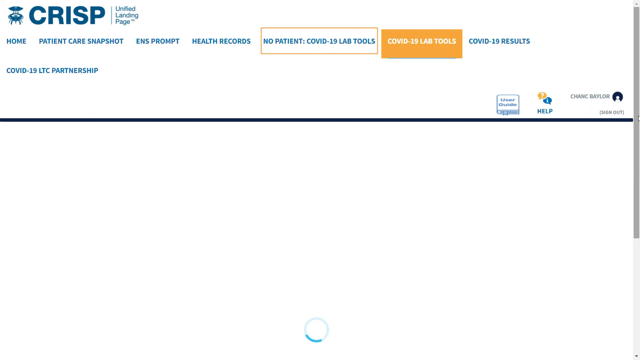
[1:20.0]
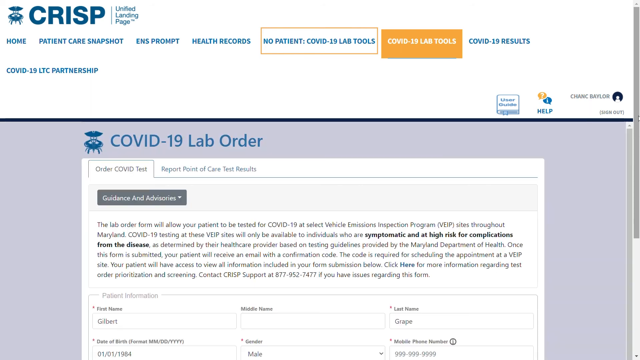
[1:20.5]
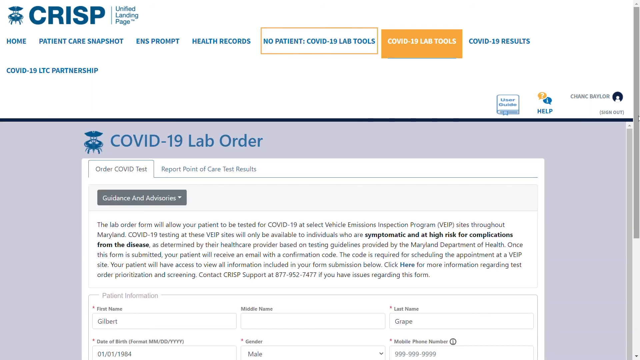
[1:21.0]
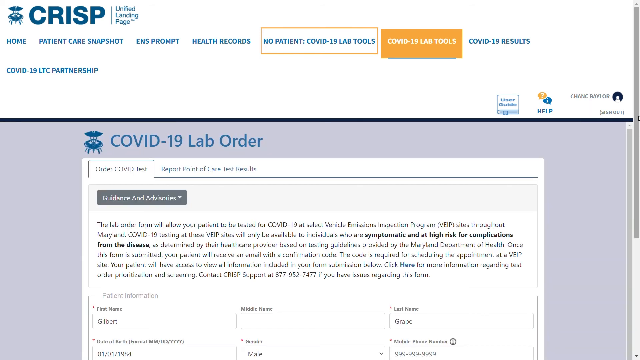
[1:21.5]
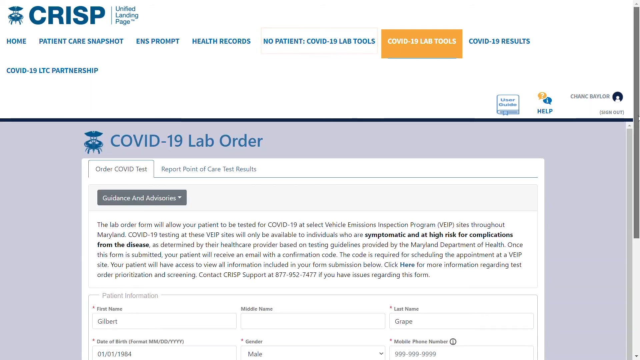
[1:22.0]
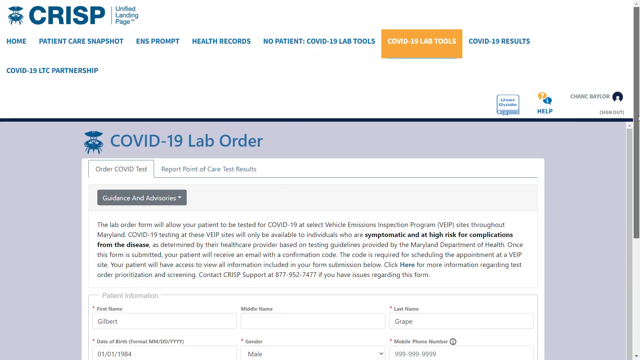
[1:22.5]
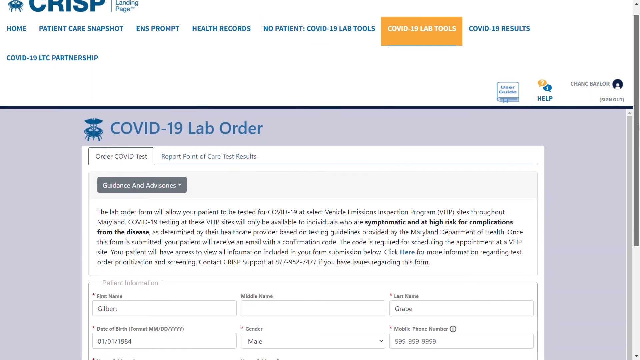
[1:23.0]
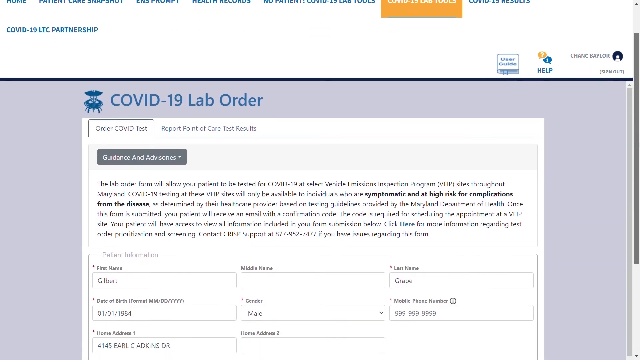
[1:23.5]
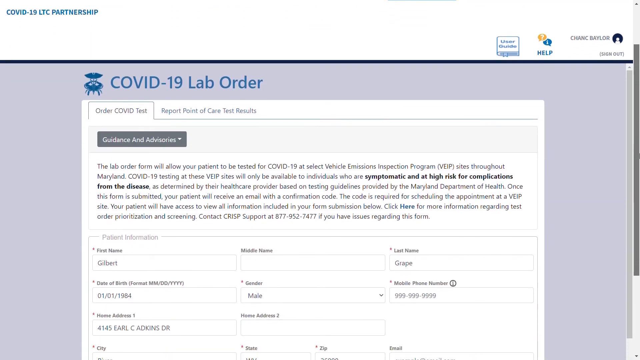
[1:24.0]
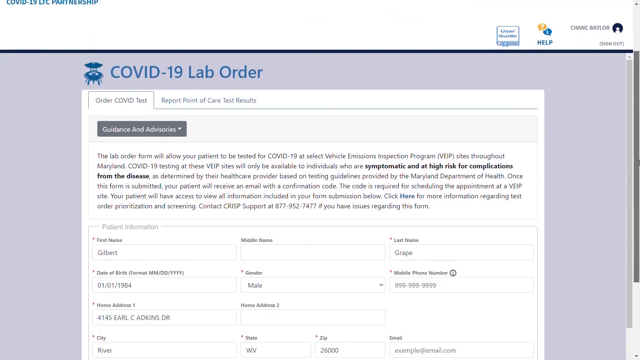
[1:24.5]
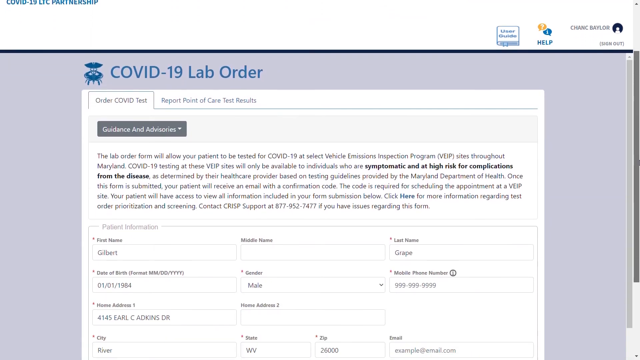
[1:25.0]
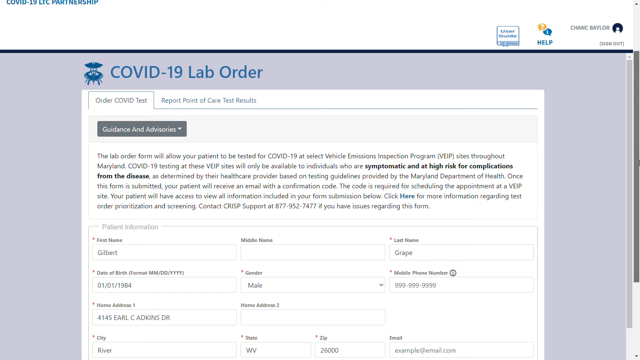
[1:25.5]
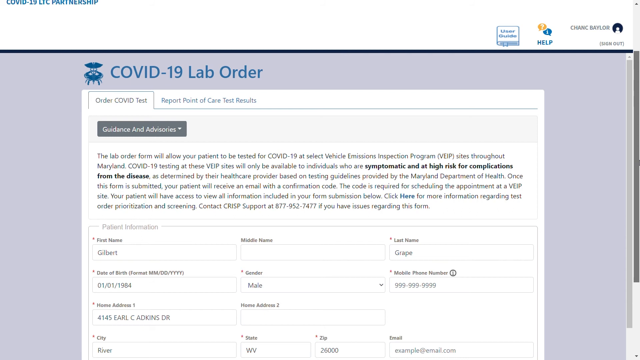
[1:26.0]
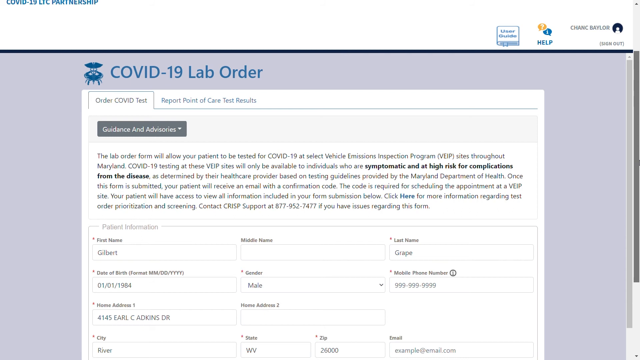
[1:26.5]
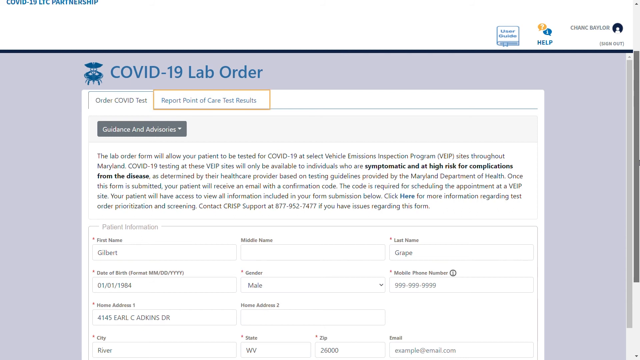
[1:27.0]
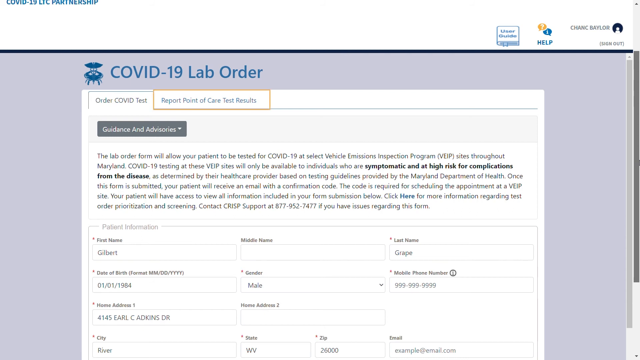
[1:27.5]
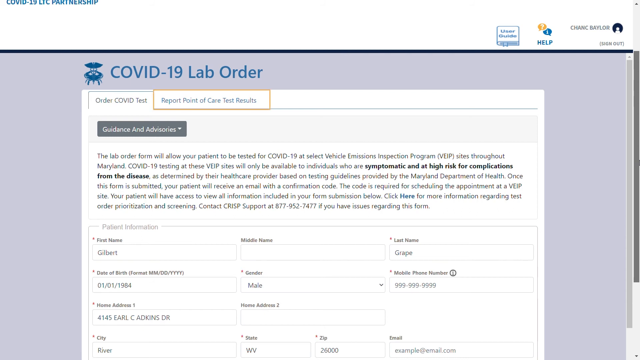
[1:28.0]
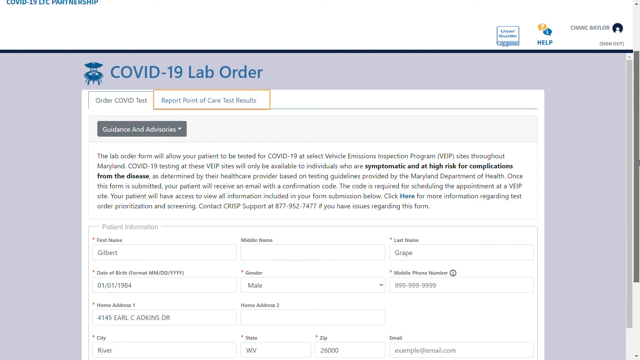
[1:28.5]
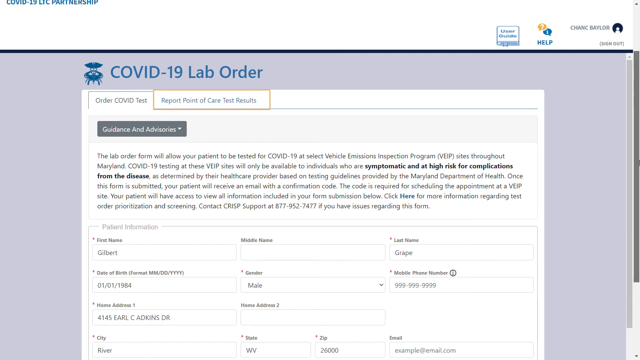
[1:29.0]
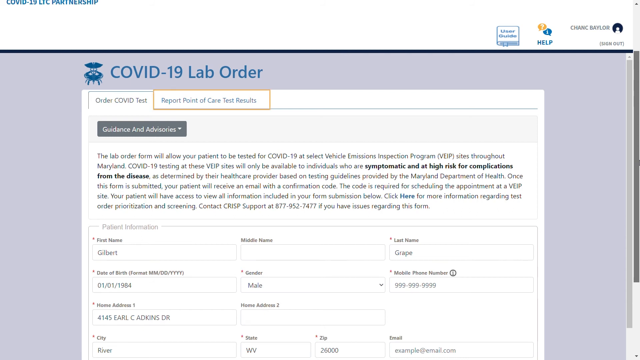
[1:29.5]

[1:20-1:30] A somewhat different CRISP page lists COVID-19 lab tools, COVID-19 results, health records, ENS prompt and patient care snapshot. The COVID-19 lab tools item is highlighted in orange. A COVID-19 lab order then appears: an information sheet with the person's name, address and gender, and "point of care test results," a test result sheet. The screen then goes somewhat blank.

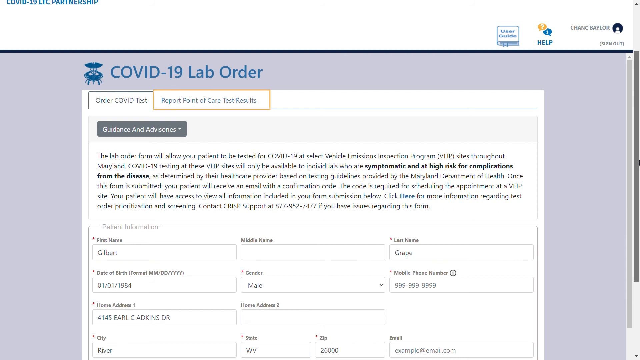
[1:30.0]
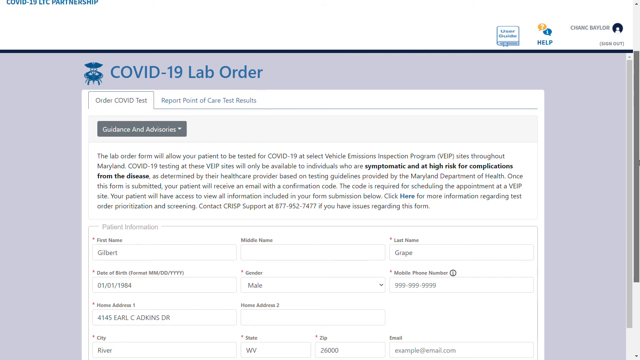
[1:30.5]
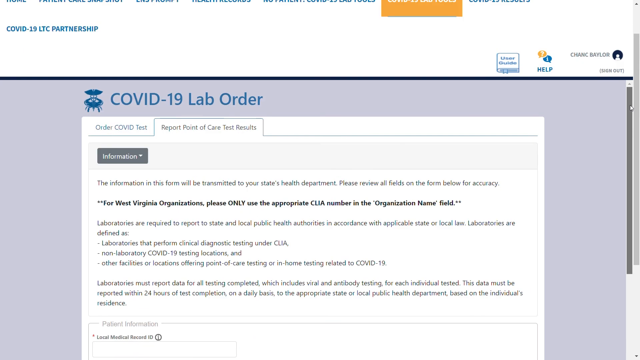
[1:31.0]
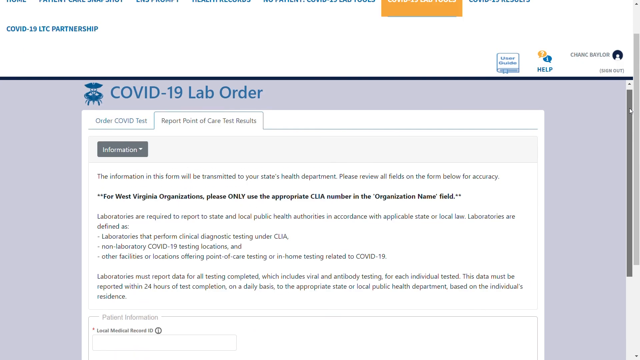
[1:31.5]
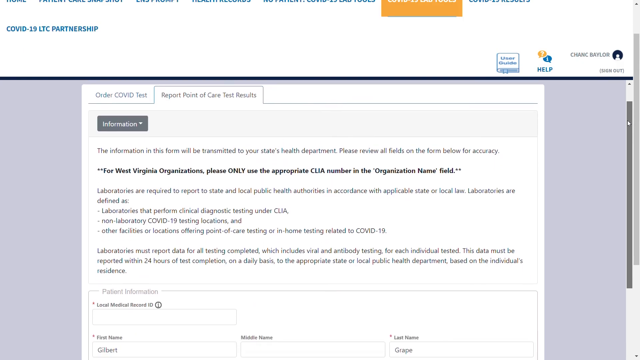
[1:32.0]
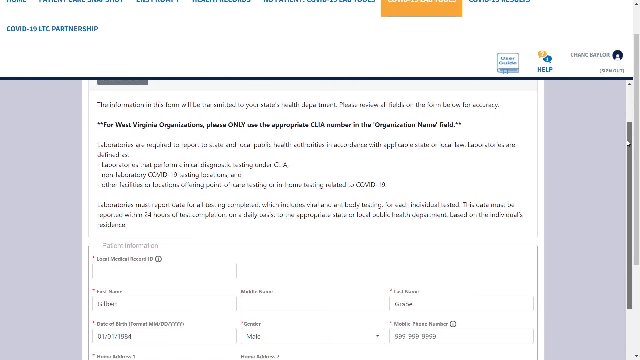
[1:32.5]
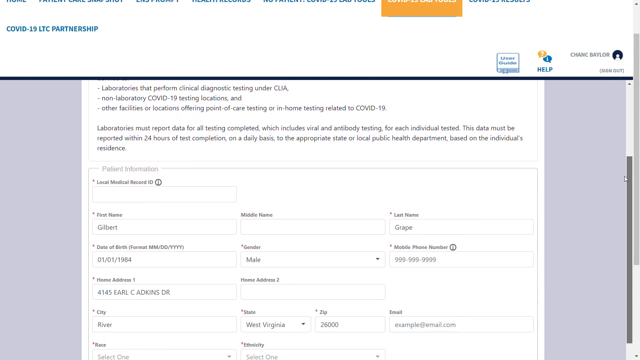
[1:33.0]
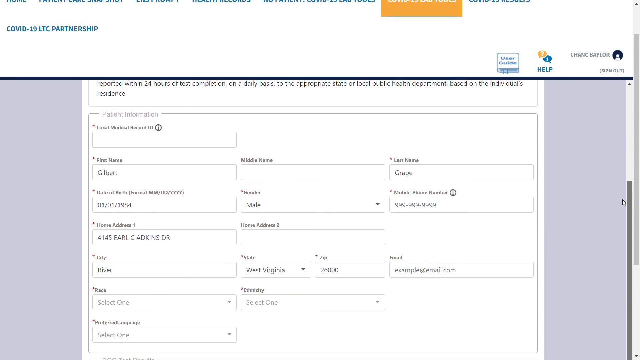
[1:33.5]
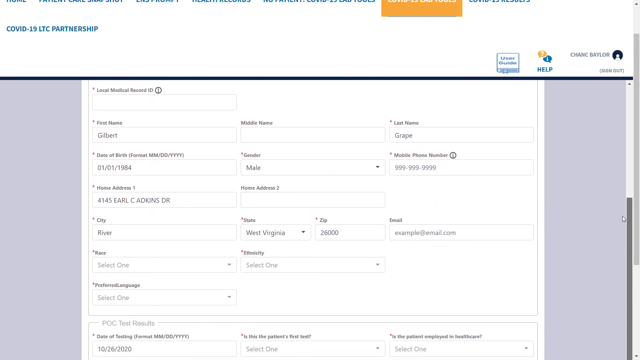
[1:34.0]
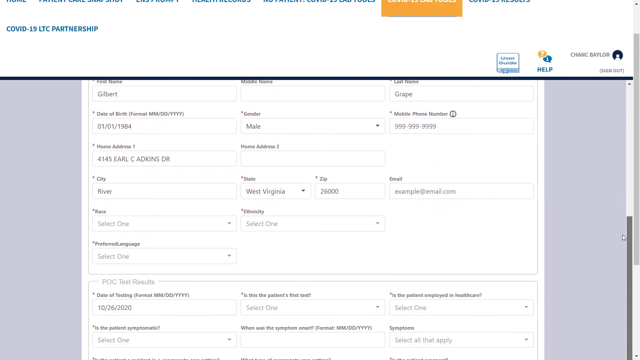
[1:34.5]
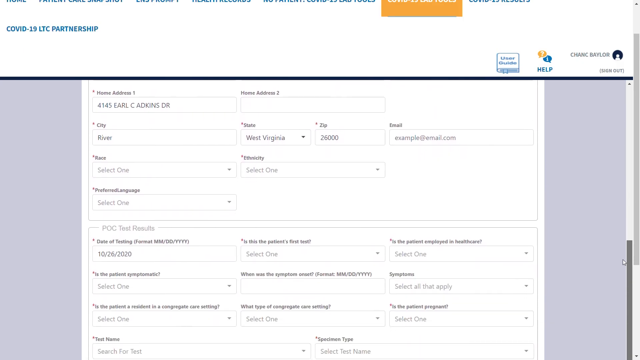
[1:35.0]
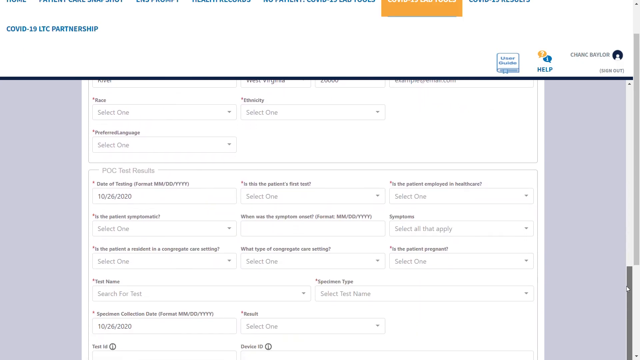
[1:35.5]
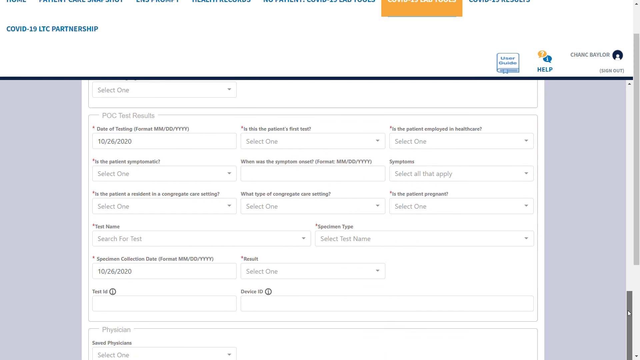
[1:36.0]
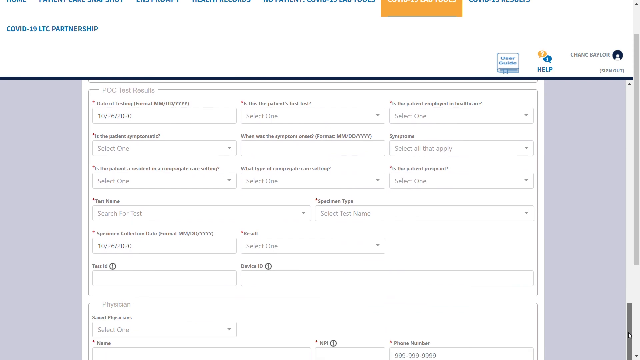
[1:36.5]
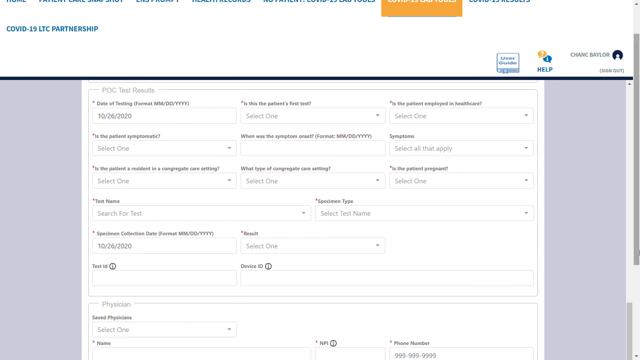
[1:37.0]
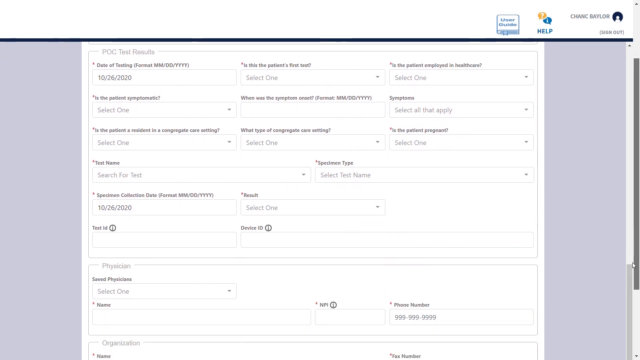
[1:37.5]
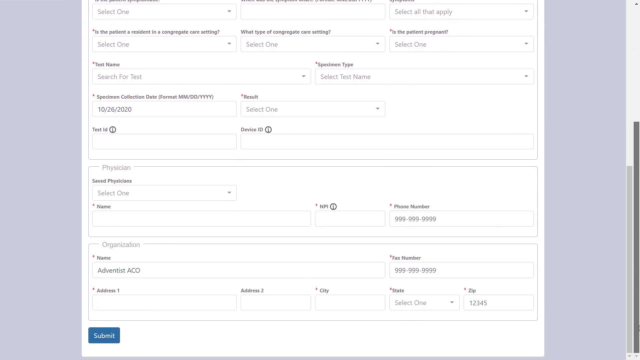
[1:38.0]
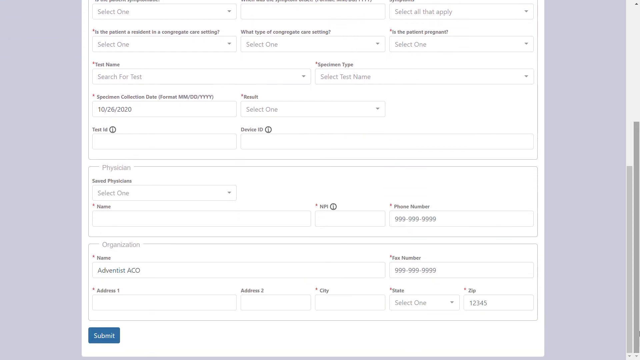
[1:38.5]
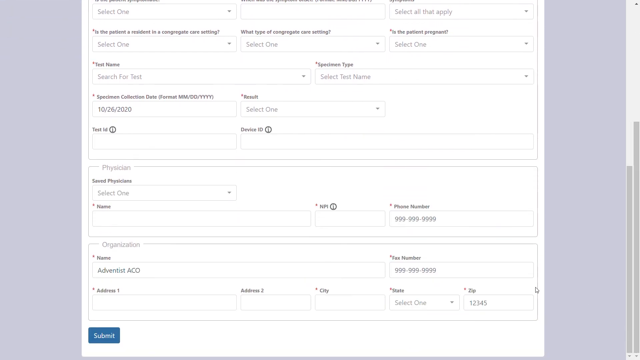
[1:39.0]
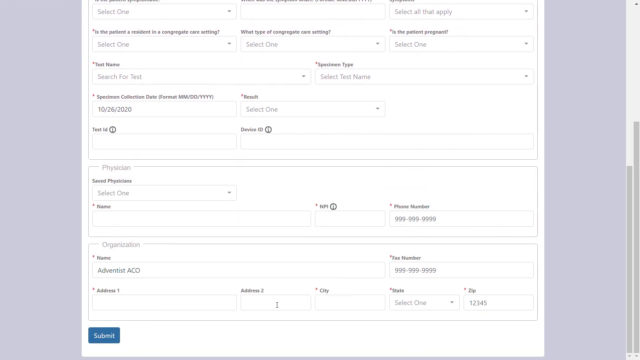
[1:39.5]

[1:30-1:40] The COVID-19 lab order remains on screen with the name, apparently a kind of permission slip for being tested for the COVID-19 virus. As it scrolls down, it shows gender, dates, the state where the person lives, phone numbers, social security numbers and other personal information. The border around the sheet on the computer screen is purplish blue, the page is white, and the COVID-19 lab order section at the top of the page is in blue.